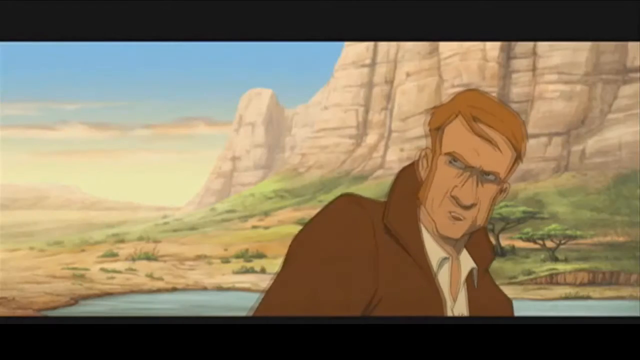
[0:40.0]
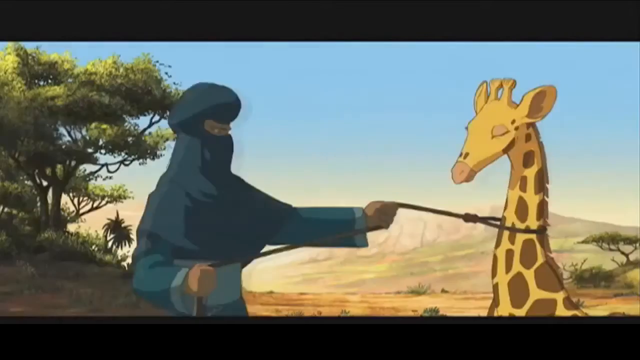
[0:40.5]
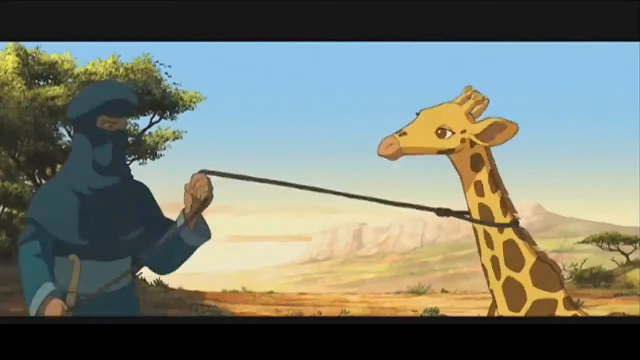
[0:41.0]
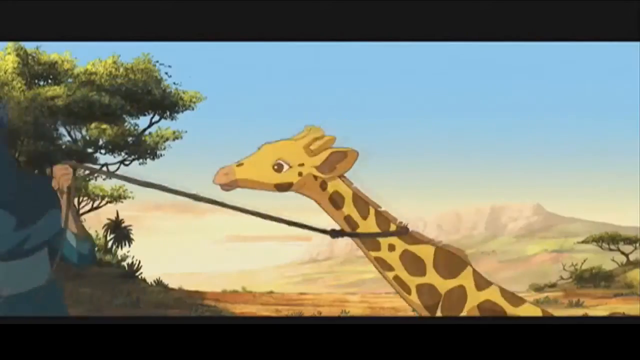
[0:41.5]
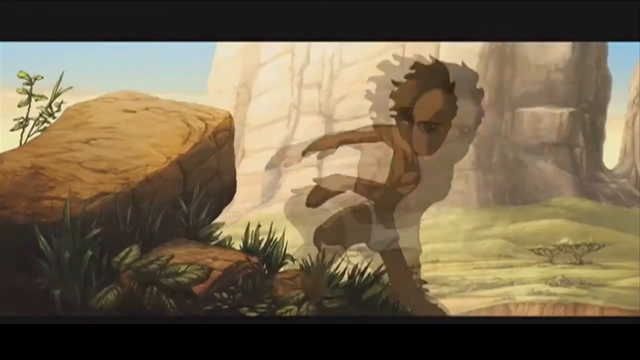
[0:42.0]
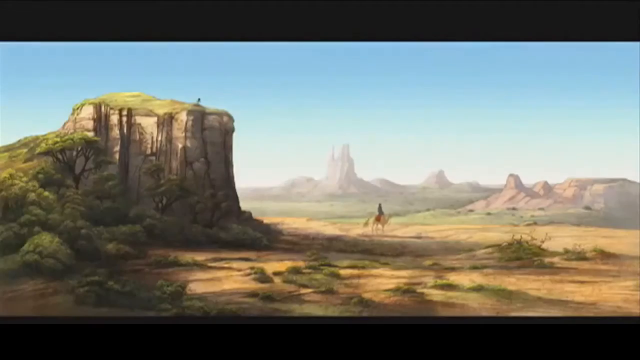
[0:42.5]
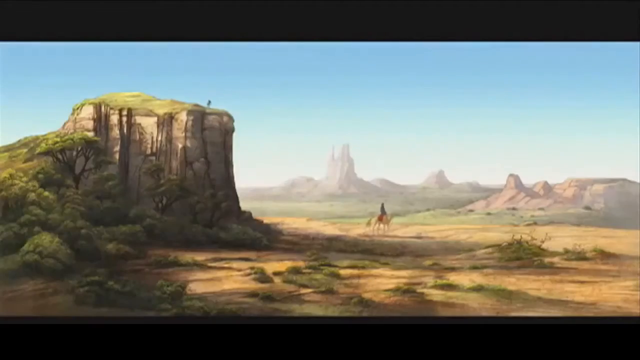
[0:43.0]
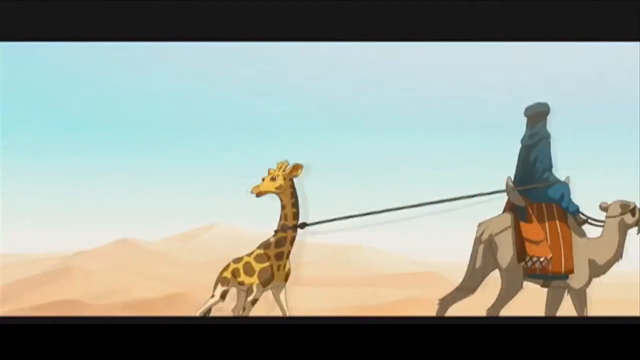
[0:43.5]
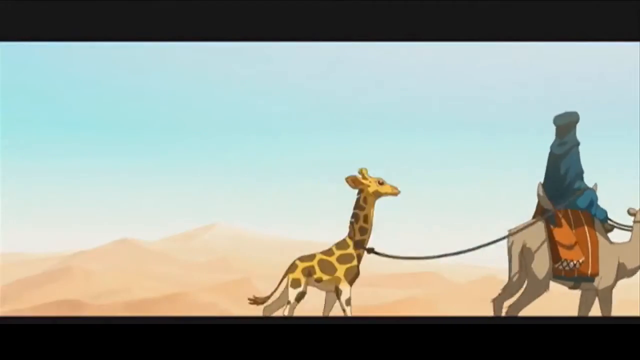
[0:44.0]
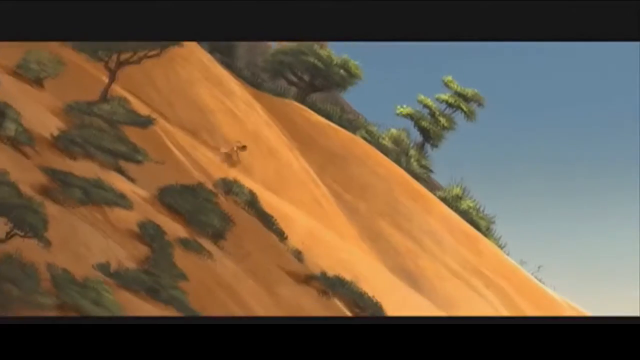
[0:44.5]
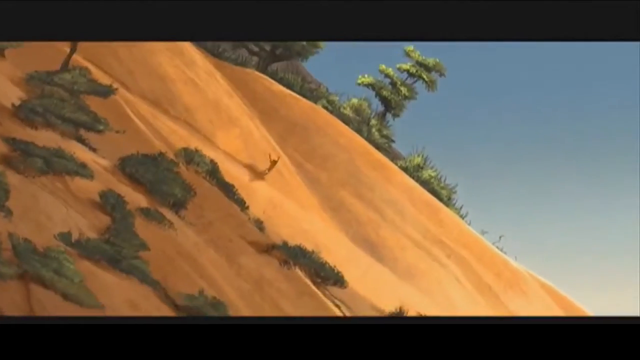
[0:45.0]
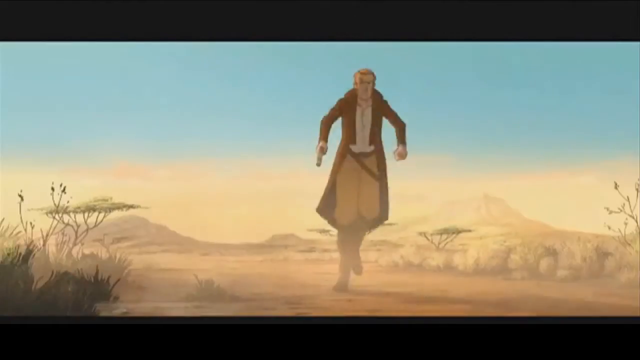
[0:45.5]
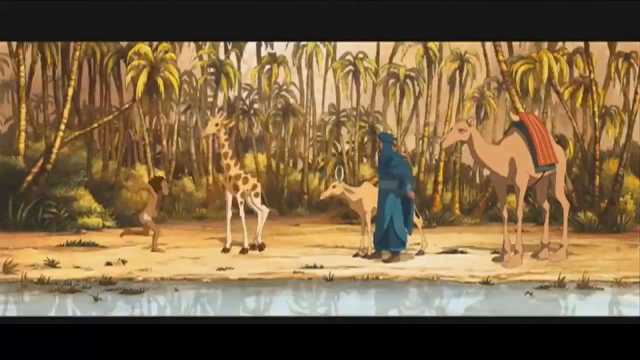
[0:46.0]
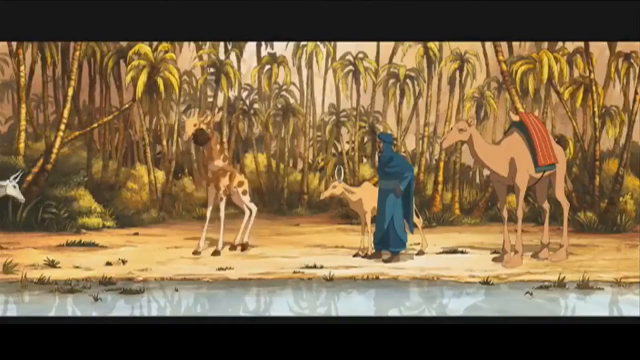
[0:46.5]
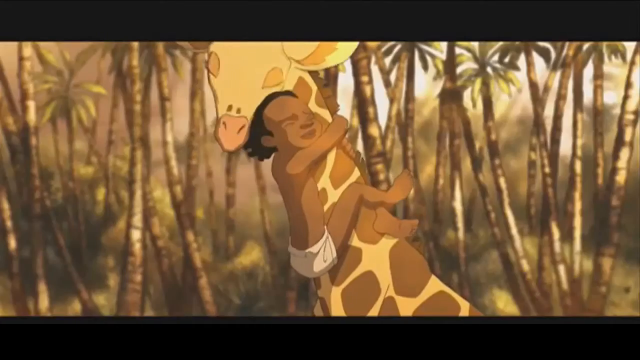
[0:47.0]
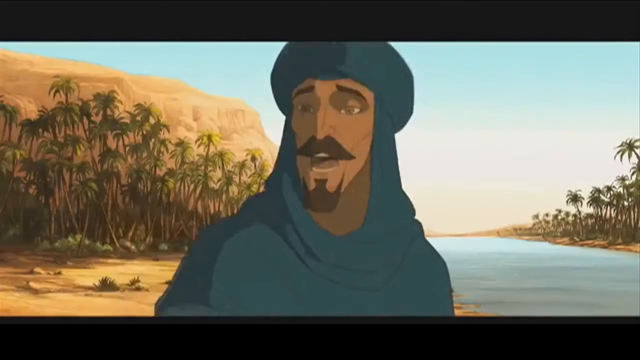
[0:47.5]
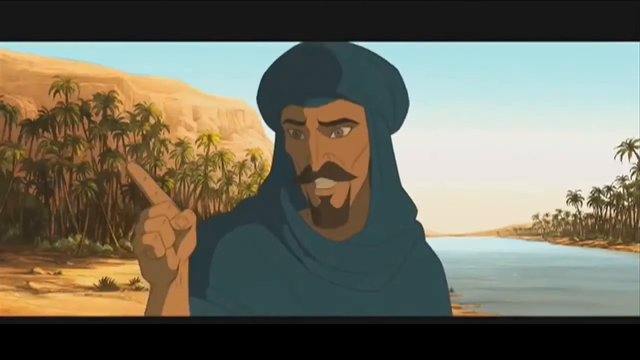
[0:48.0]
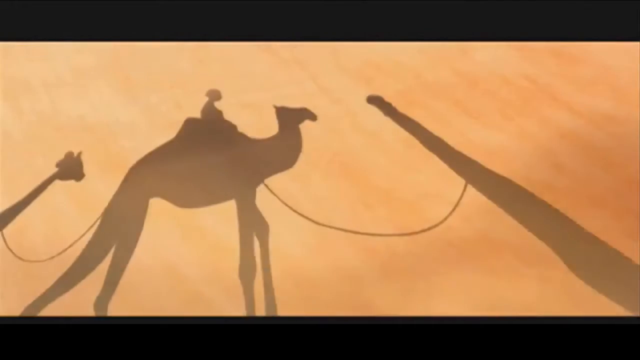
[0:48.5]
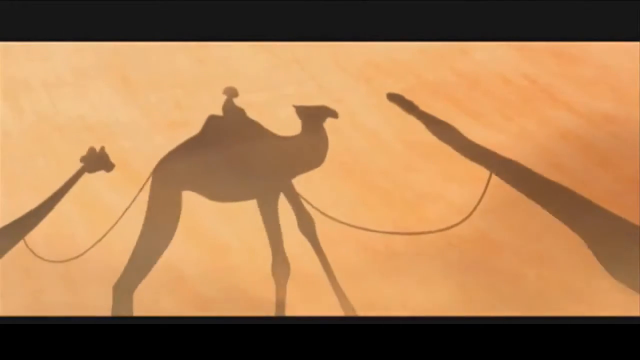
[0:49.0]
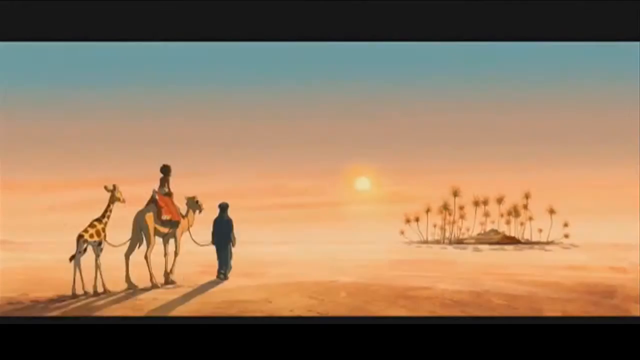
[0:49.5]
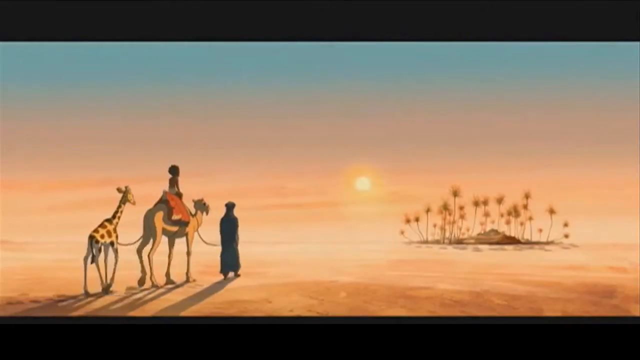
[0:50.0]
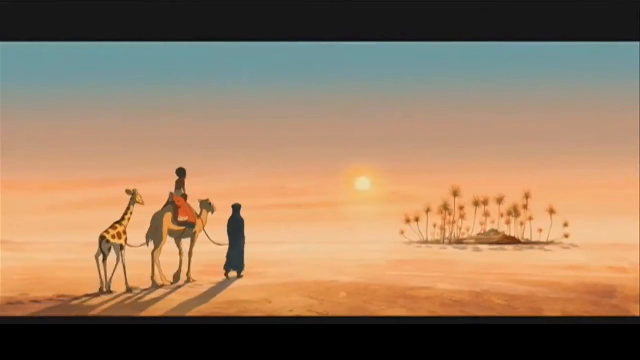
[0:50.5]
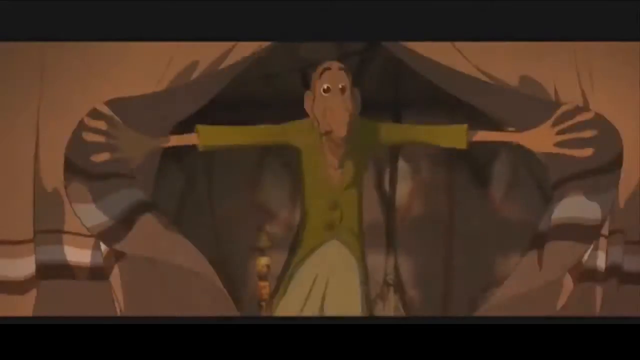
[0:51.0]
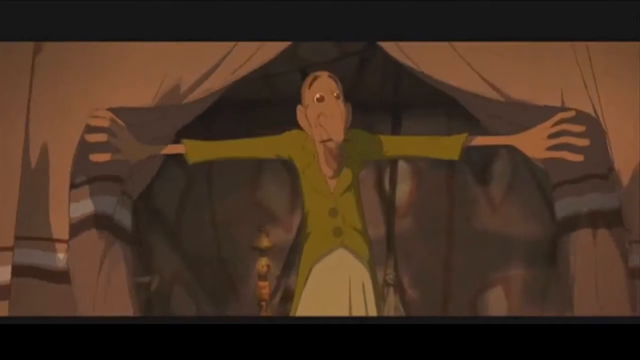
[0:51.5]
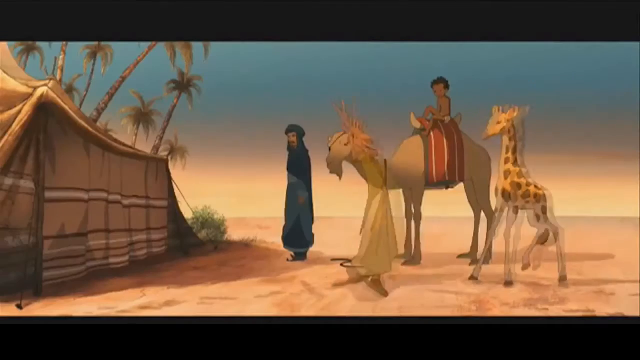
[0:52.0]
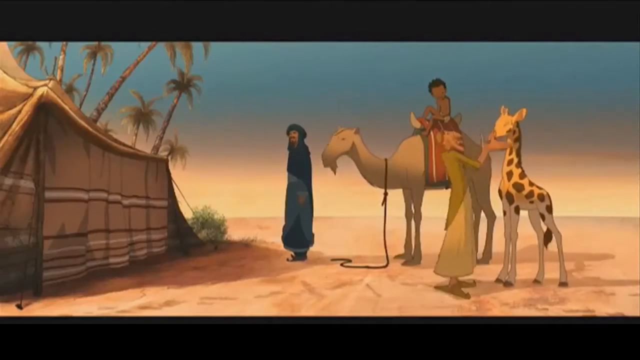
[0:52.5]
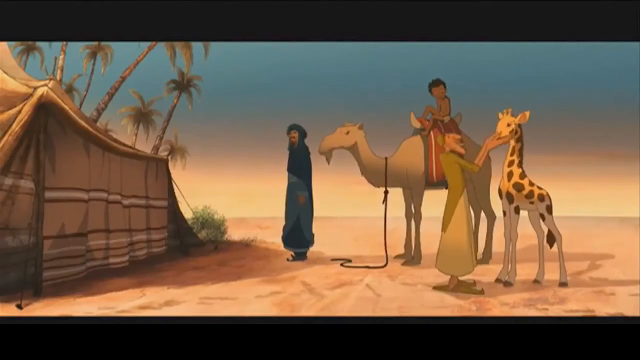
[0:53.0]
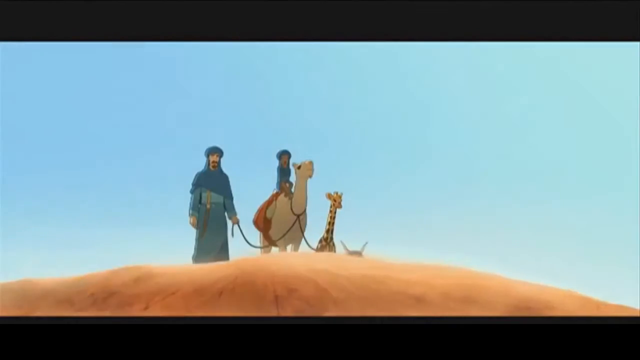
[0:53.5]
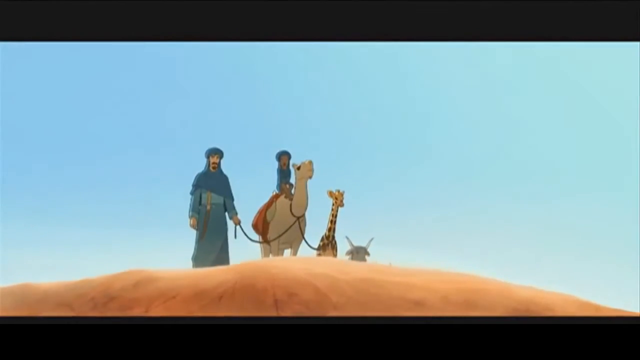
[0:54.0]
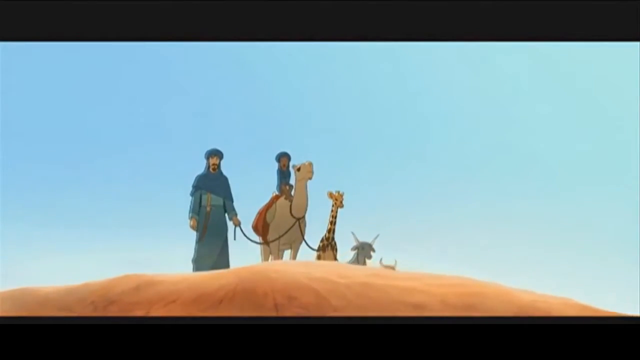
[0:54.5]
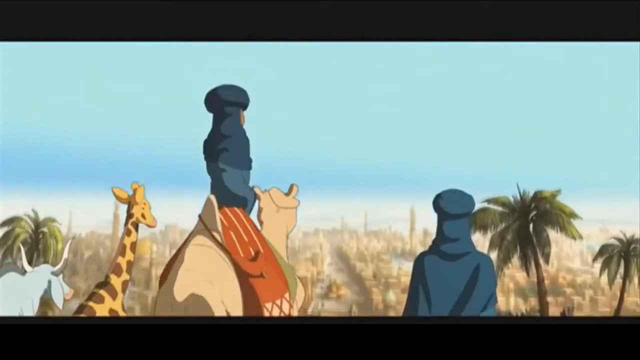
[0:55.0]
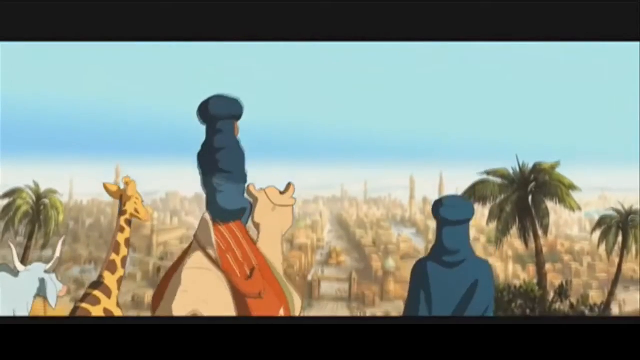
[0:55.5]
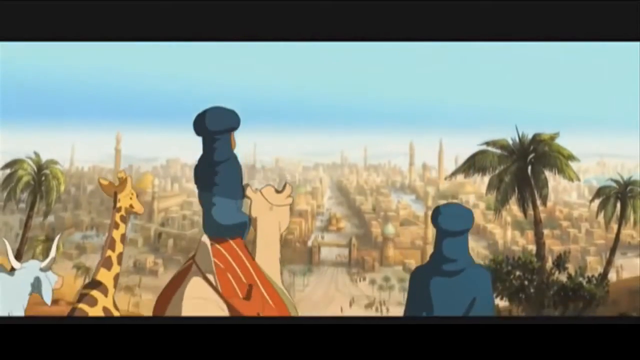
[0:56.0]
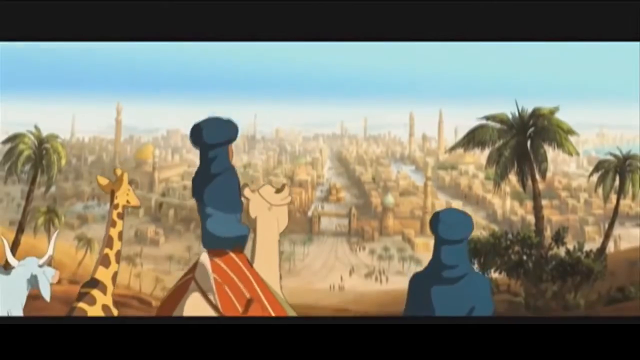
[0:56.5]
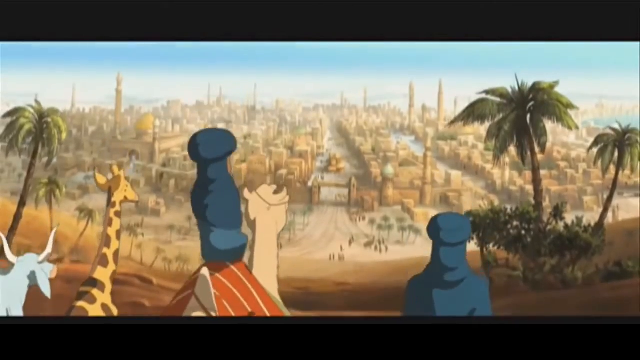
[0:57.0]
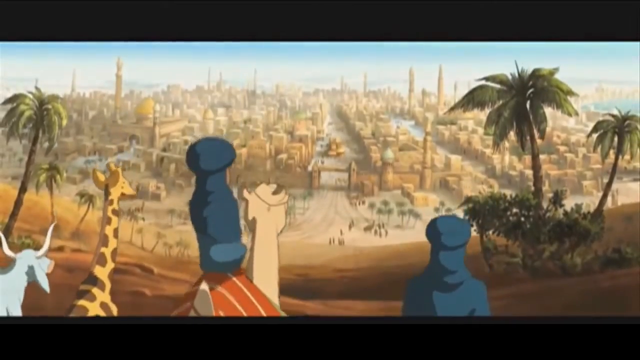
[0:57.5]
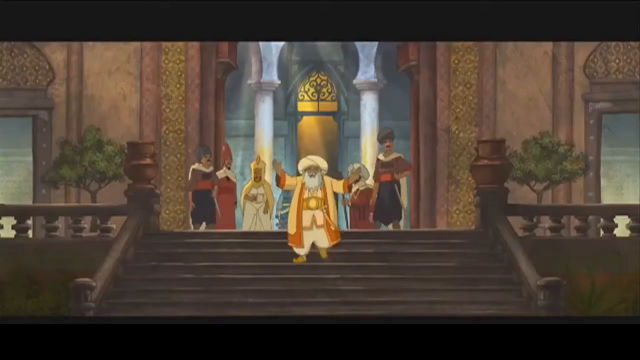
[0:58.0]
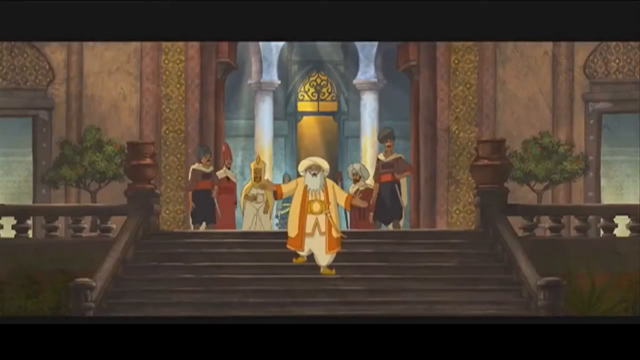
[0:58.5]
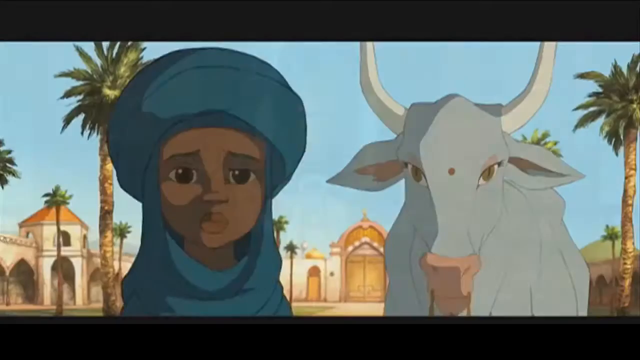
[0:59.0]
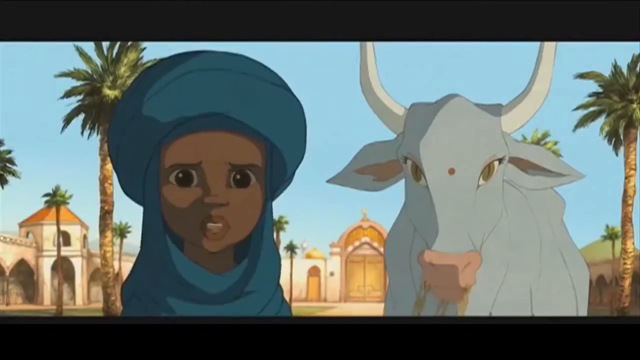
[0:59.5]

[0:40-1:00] A series of scenes from the animated film trailer mostly involves an adult man in Arab-style clothing: a blue turban with a veil he uses to cover his face and a long blue robe. He is seen primarily leading a small giraffe by a rope around its neck, followed by a young boy with dark skin, dark hair and dark eyes who wears a loincloth. The man carries the giraffe away; he sits on a camel and leads the giraffe behind him with the rope. The boy runs behind them, and in one scene jumps up to hug the giraffe around the neck. In the next scene the man leads the camel by a rope, the giraffe follows behind the camel on another rope, and the boy sits atop the camel, shown in silhouette as they cross a desert. They arrive at an oasis in the desert, where another man comes out to them and a cow is added to their group. The group continues across the desert and arrives at a large city in the desert. A few scenes show the interior of what looks like a palace, built in an Arab style with onion-domed arches, where a man who looks like a sultan or a king, very richly dressed and wearing a turban, walks down a flight of stairs toward the group.